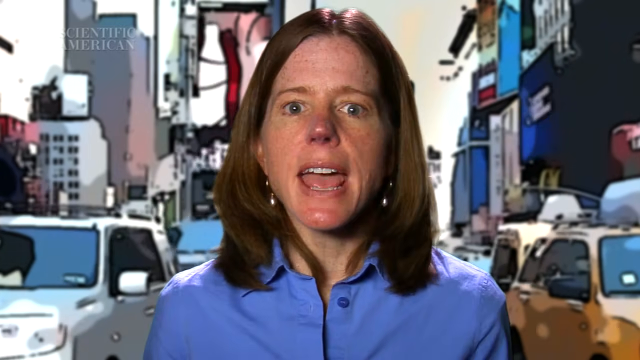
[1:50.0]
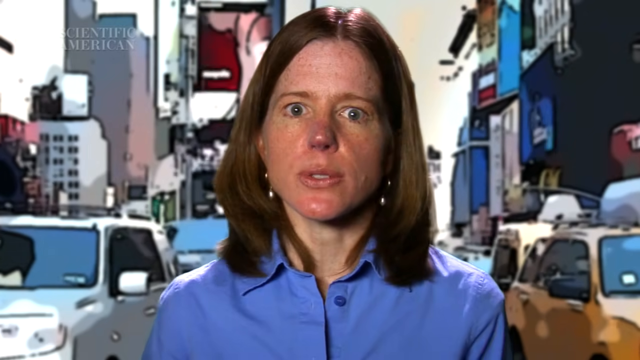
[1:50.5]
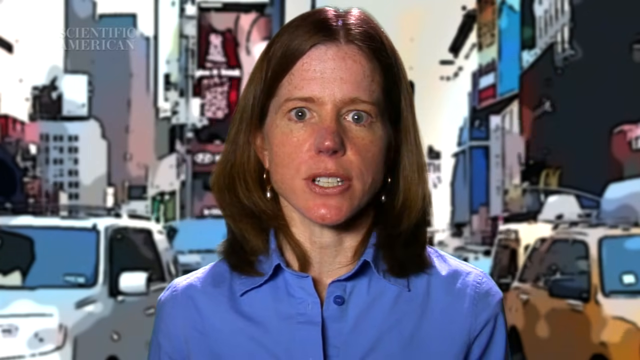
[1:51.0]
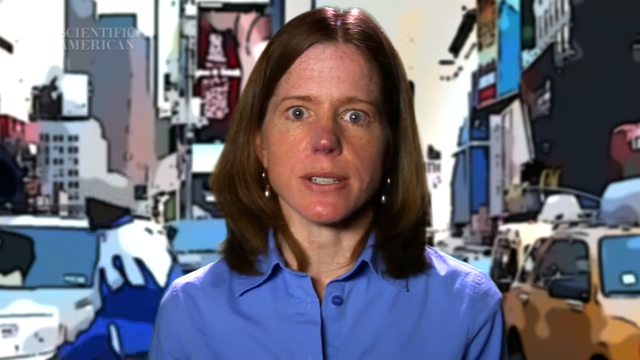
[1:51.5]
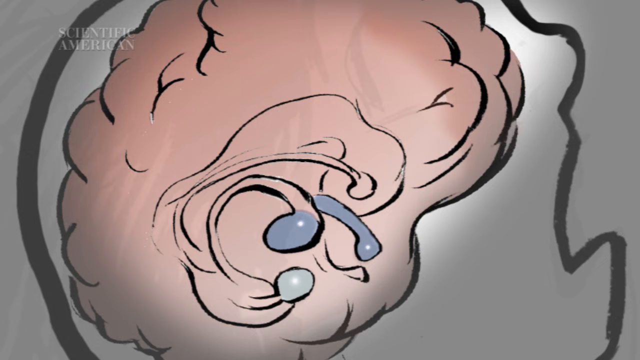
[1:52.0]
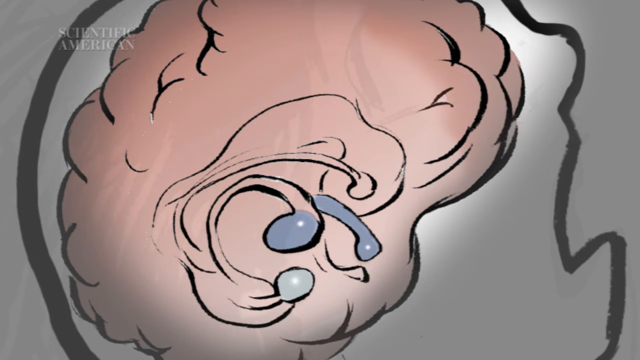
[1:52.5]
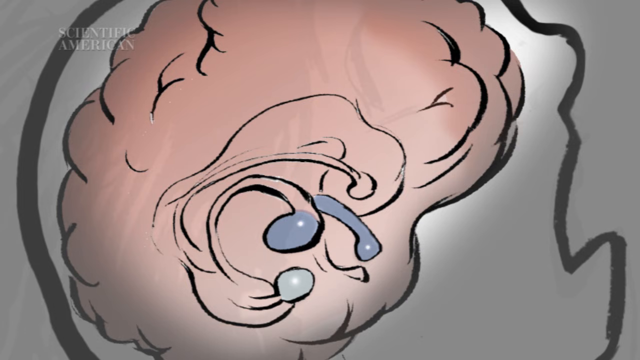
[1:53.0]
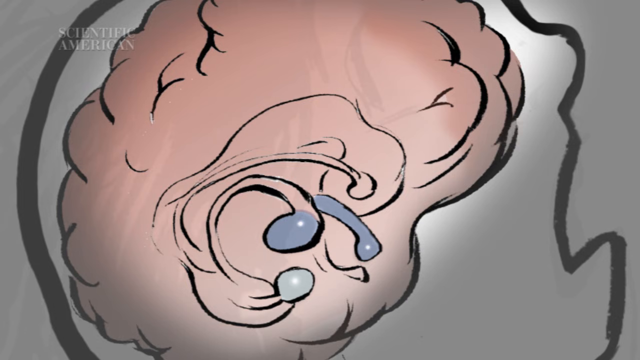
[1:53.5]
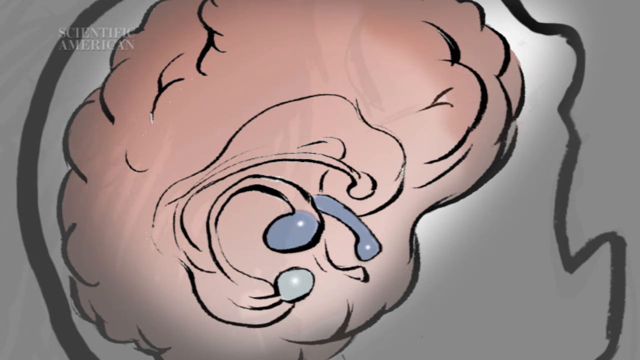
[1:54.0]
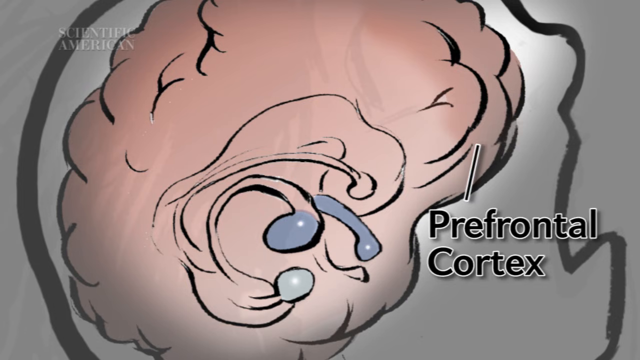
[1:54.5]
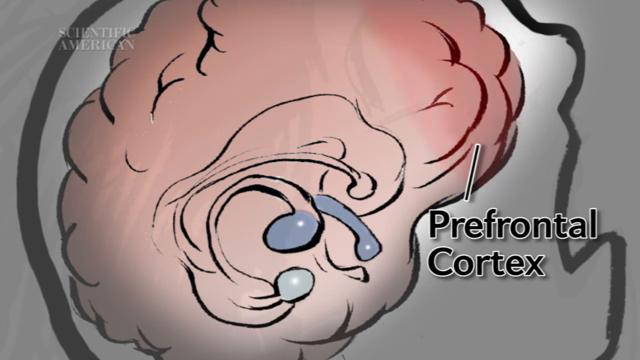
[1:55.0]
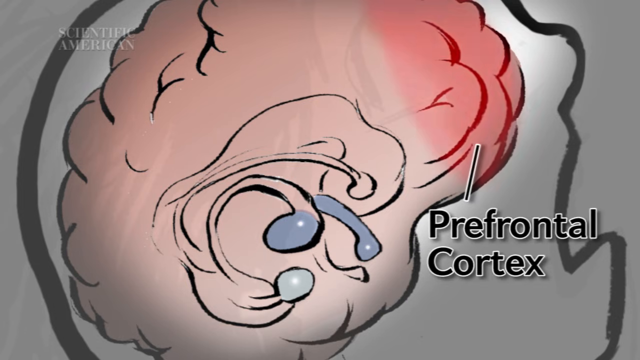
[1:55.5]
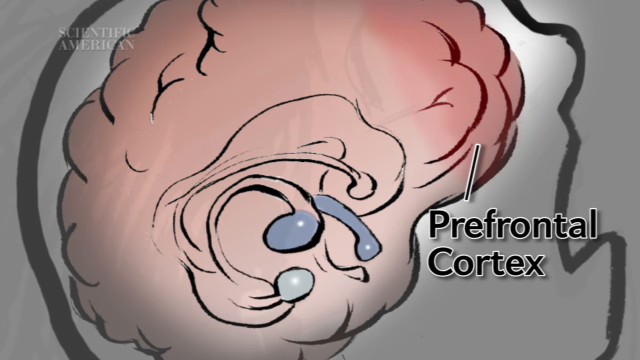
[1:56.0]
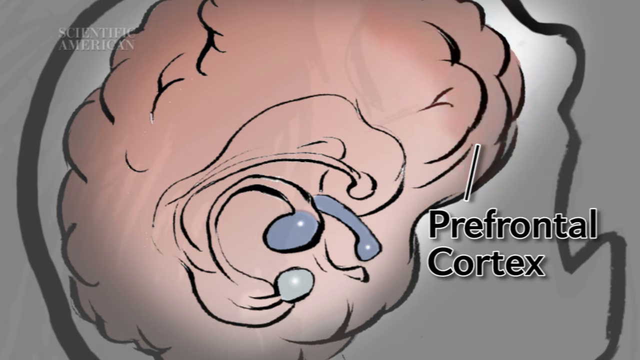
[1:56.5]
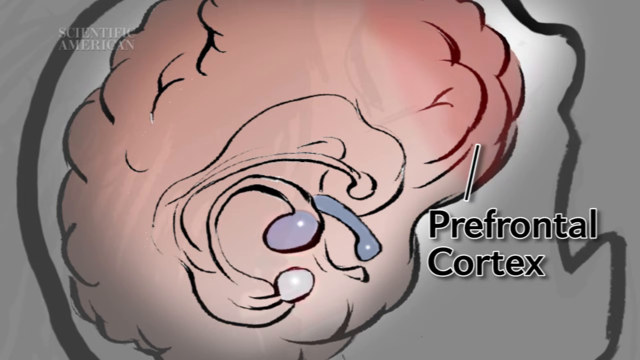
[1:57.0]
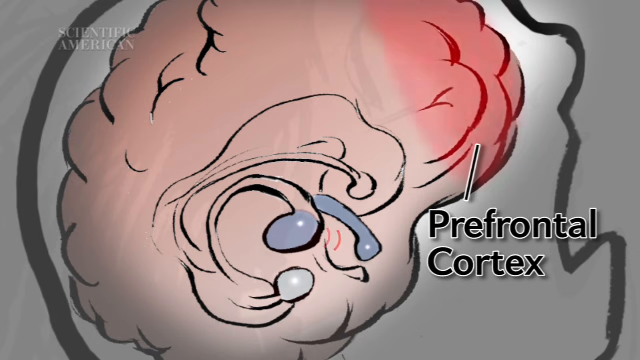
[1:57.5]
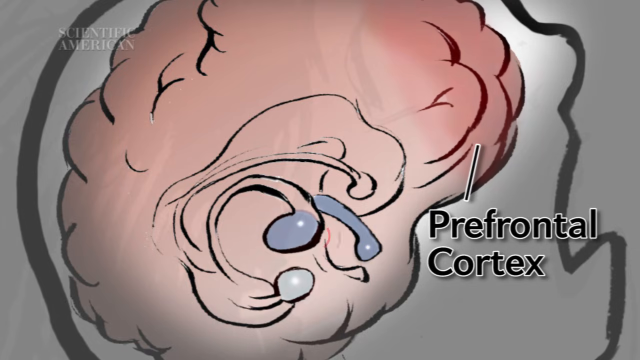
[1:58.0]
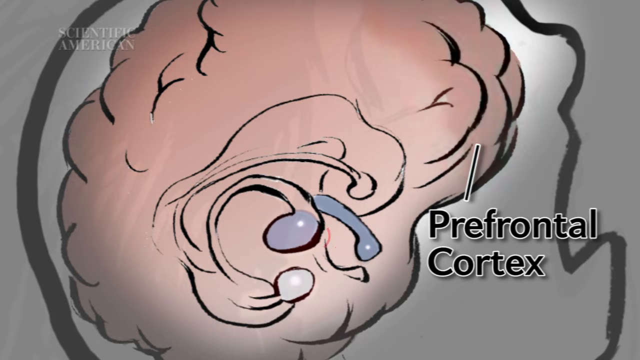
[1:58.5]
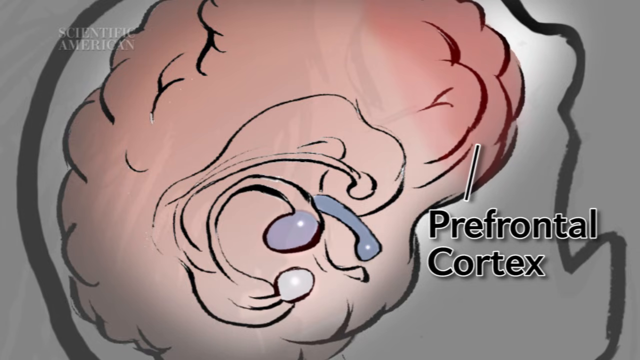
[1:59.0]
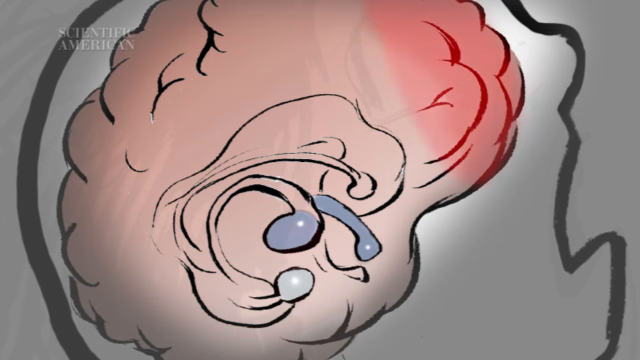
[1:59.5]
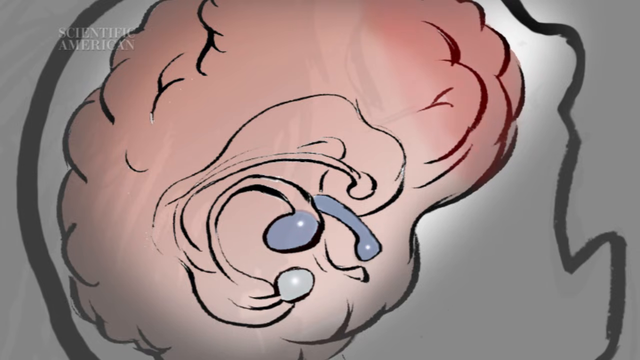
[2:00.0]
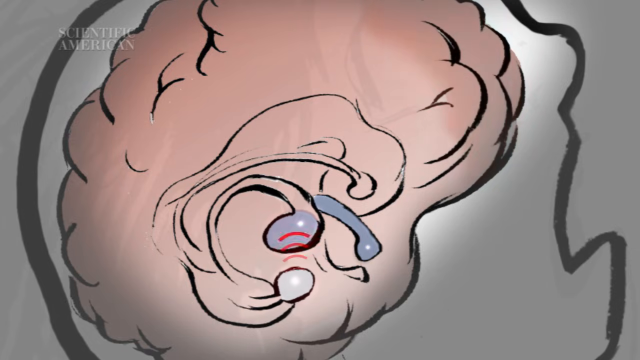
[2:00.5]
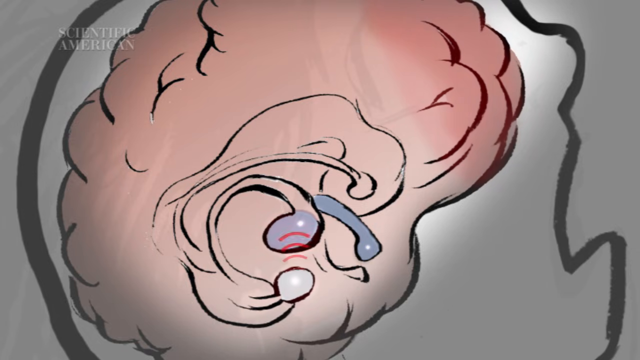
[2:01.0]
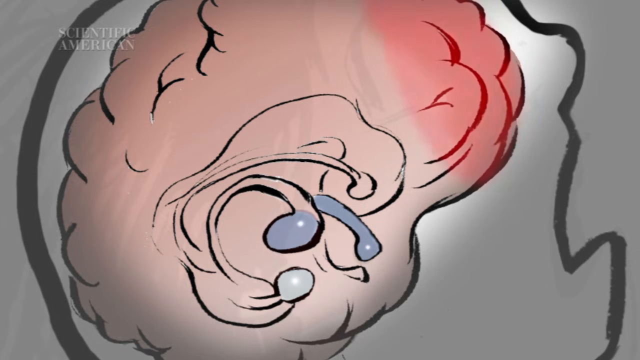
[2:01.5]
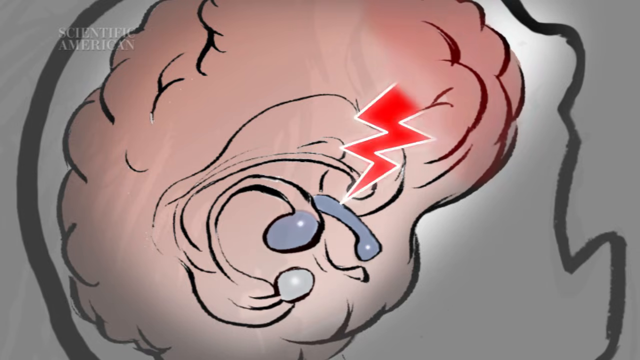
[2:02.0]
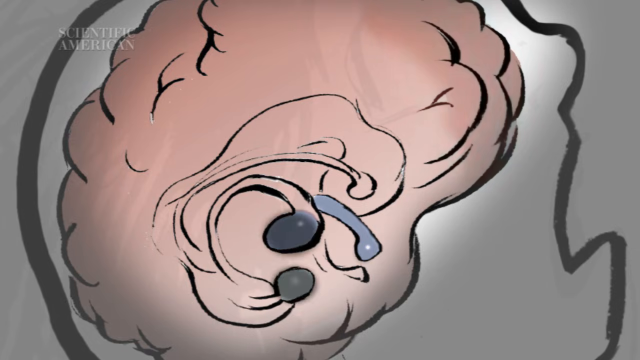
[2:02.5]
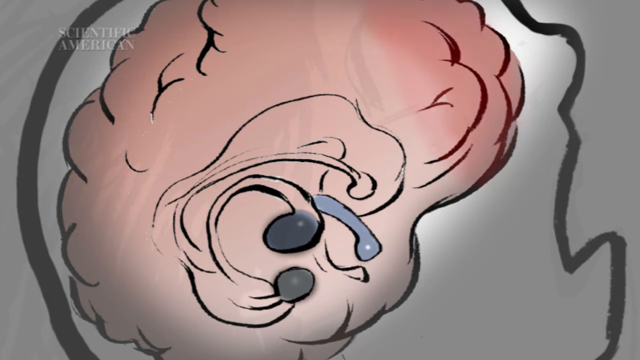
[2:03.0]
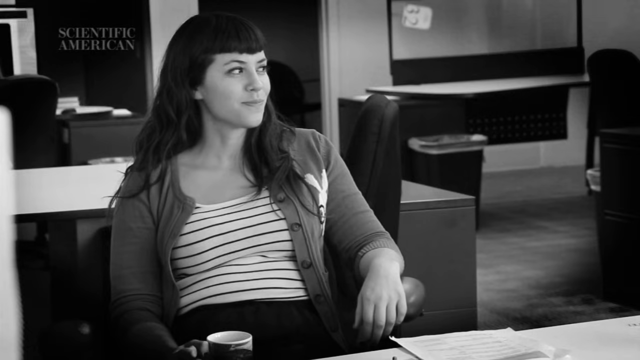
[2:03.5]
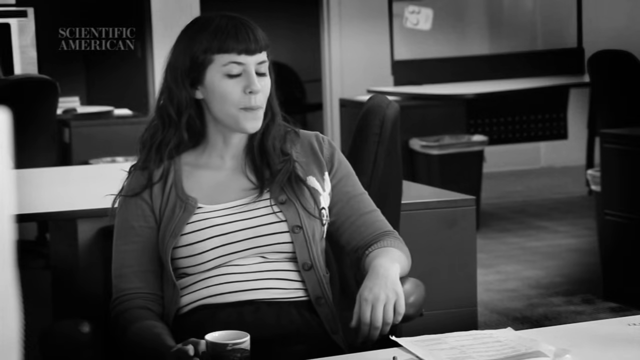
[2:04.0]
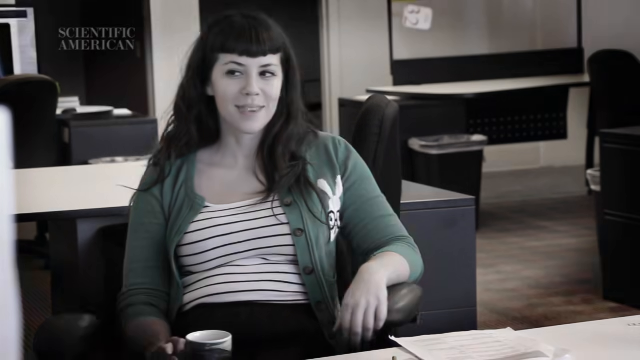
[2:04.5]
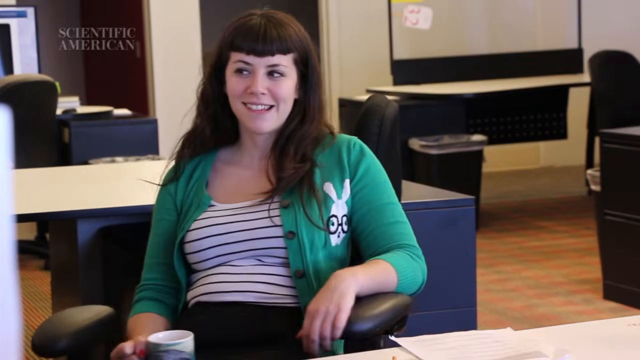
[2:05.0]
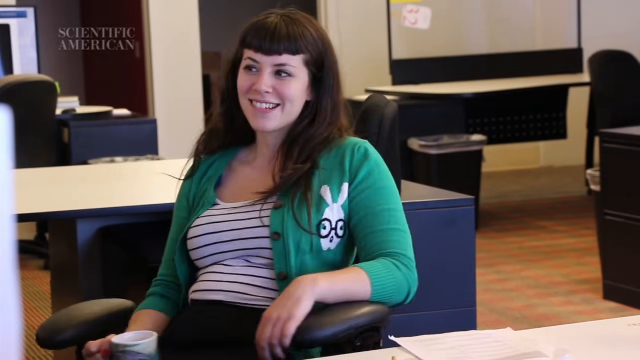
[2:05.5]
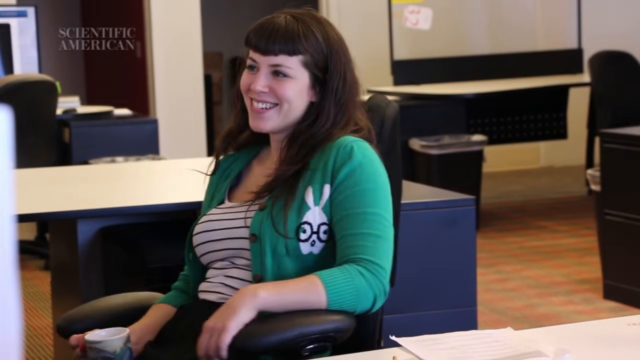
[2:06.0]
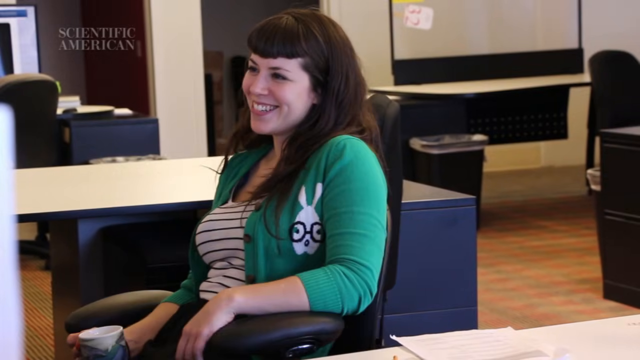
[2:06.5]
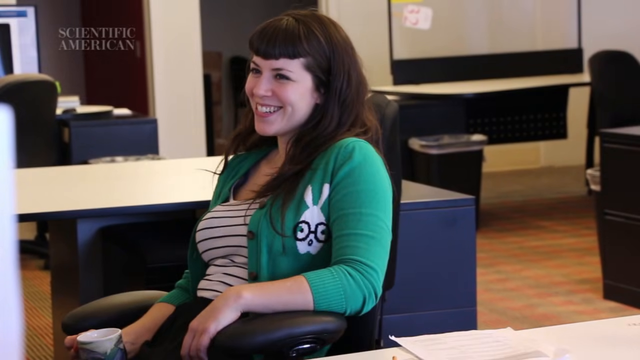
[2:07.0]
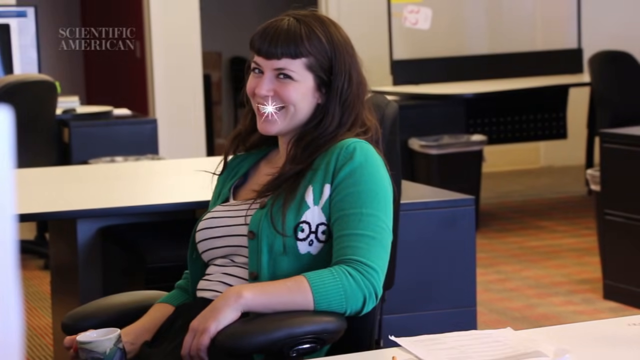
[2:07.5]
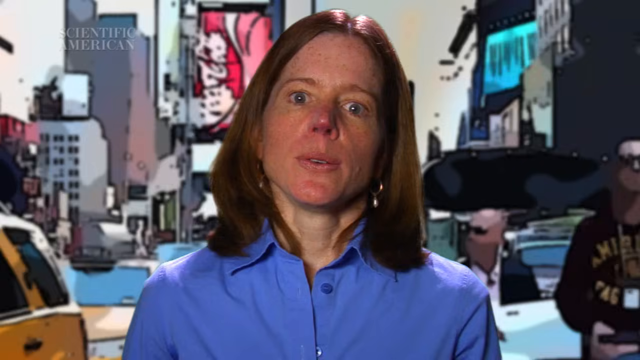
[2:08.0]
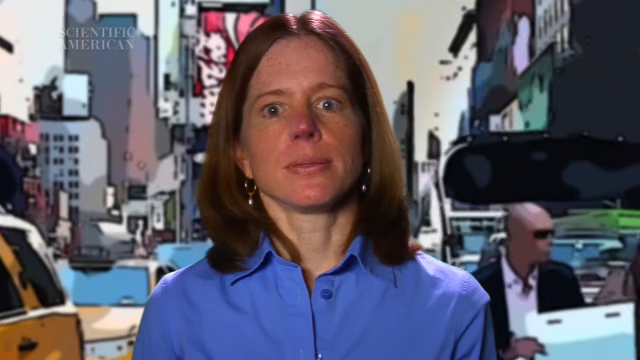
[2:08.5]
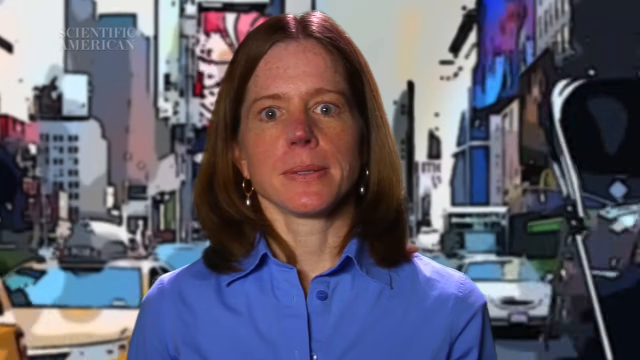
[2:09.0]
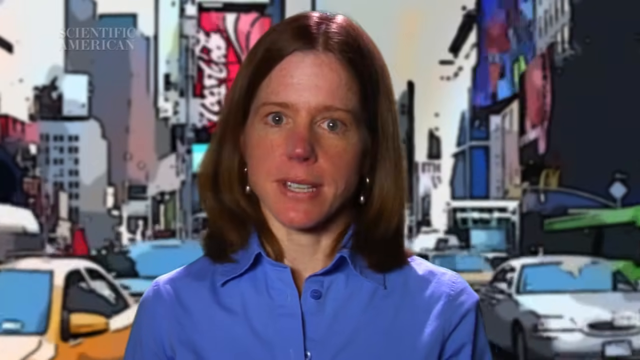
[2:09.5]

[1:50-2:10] A close-up shows the woman's face in the middle of the street in Times Square, with traffic approaching from behind her on both sides. The video transitions to a drawing of the inside of a human skull with the brain. The words "prefrontal cortex" appear with a line pointing to that section, which pulsates red. The three previous sections are also pulsating, like emitting a signal. A red lightning bolt pops up from the prefrontal cortex back toward the middle of the other three sections. The video transitions to an empty office, where the woman seen earlier sits in an office chair, appearing happy, side-eyeing and smiling. Then everything becomes color instead of black and white: her sweater is green and her top is striped, white and possibly black or some dark color. She sort of twists side to side in the office chair, grinning, then side-eyes the camera.